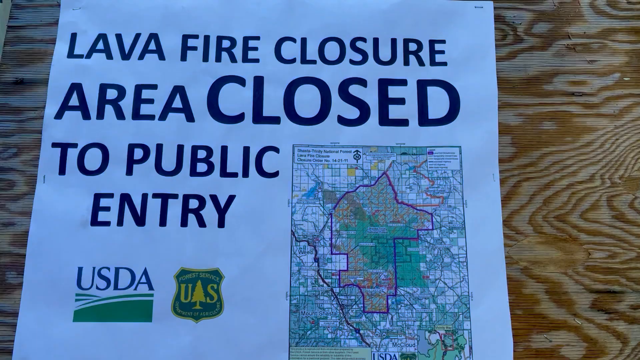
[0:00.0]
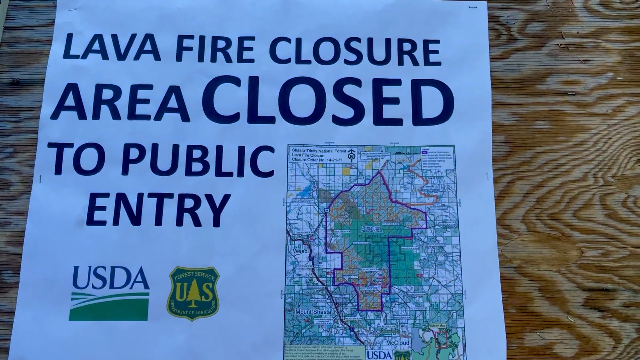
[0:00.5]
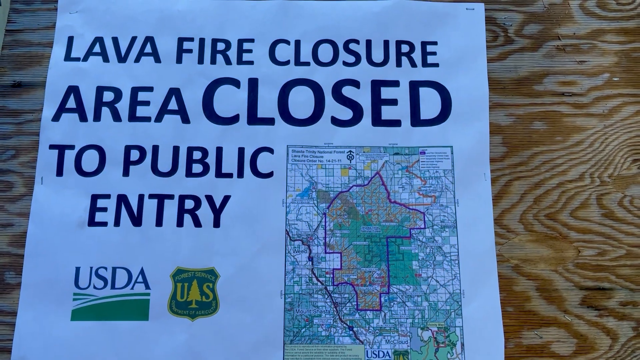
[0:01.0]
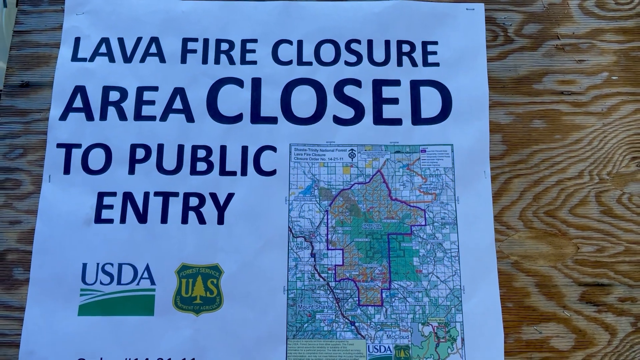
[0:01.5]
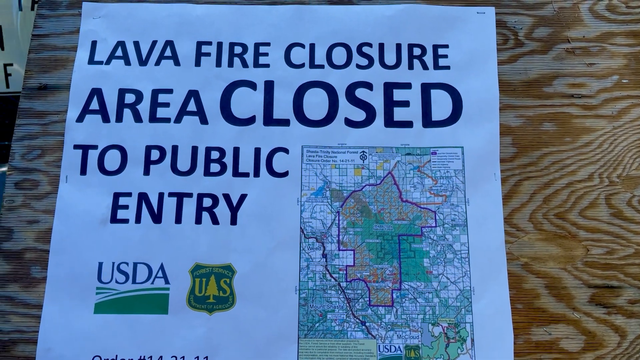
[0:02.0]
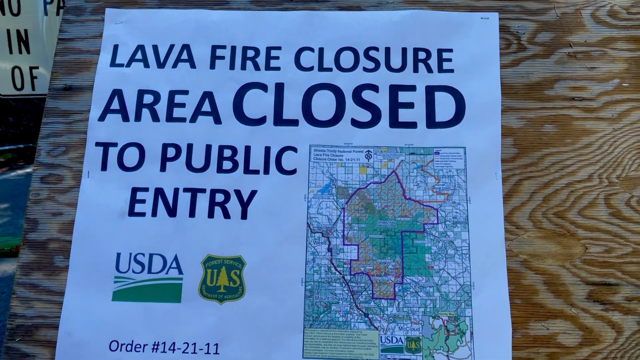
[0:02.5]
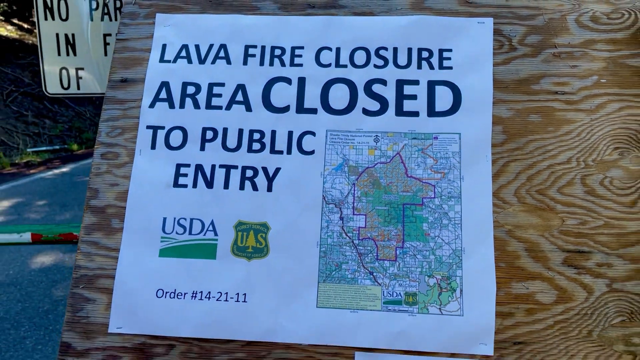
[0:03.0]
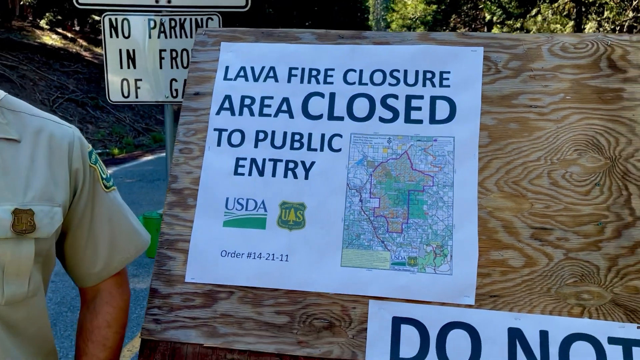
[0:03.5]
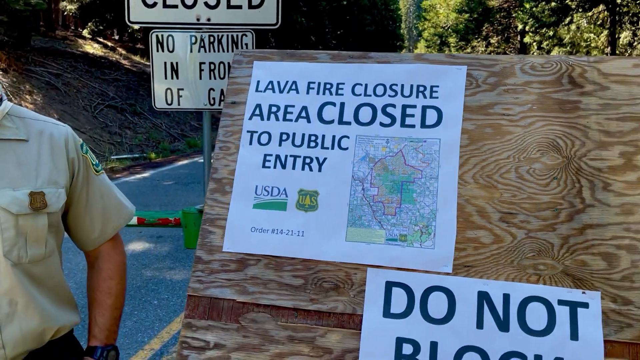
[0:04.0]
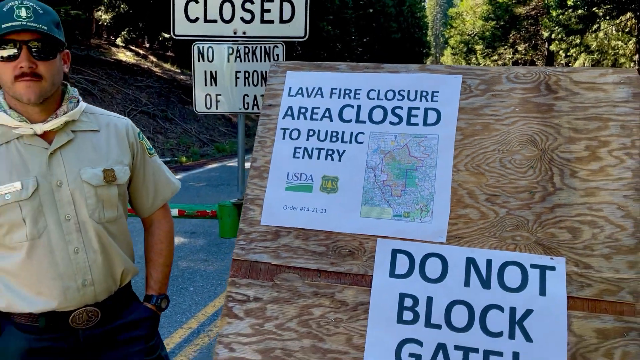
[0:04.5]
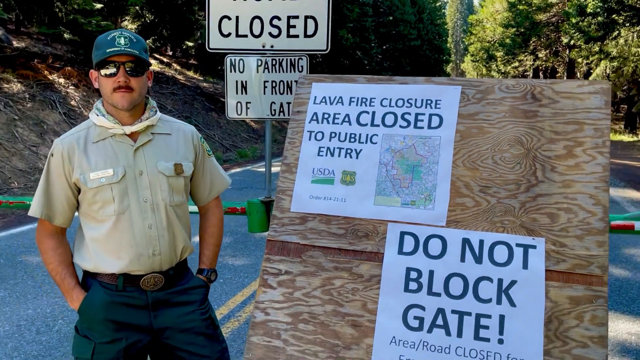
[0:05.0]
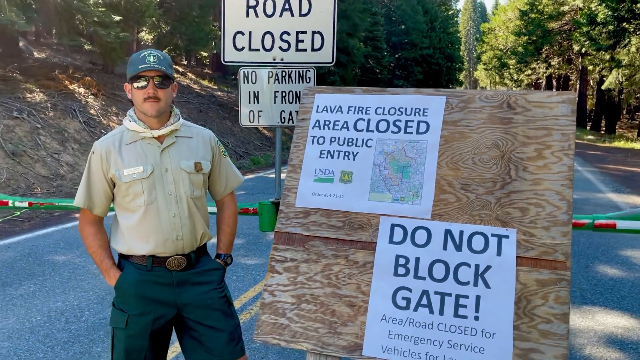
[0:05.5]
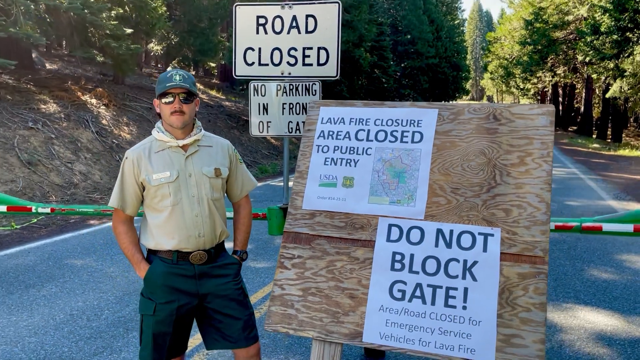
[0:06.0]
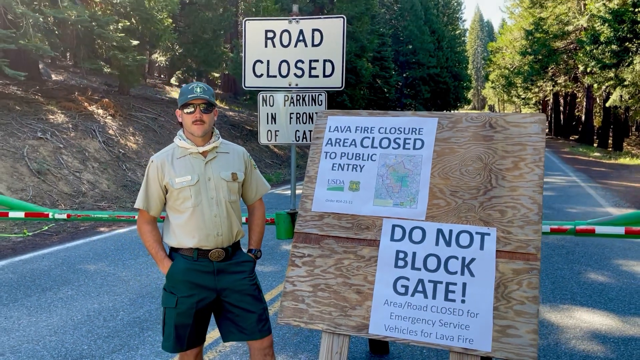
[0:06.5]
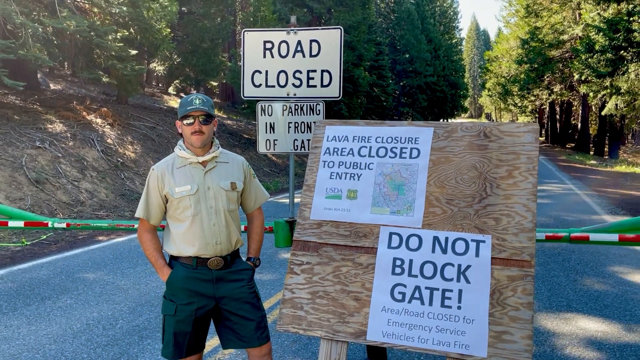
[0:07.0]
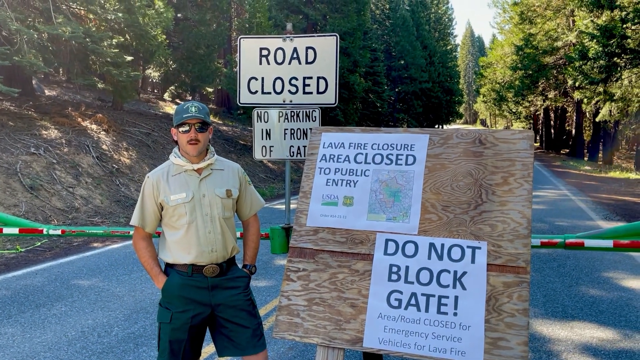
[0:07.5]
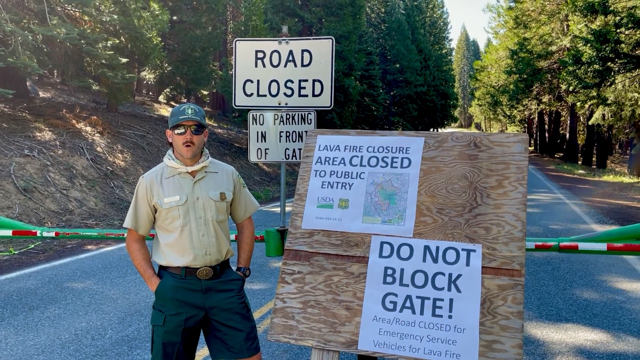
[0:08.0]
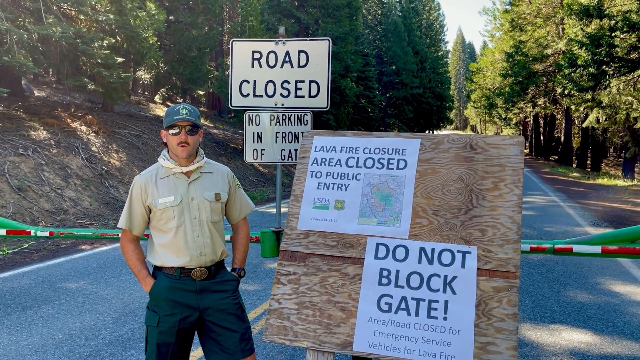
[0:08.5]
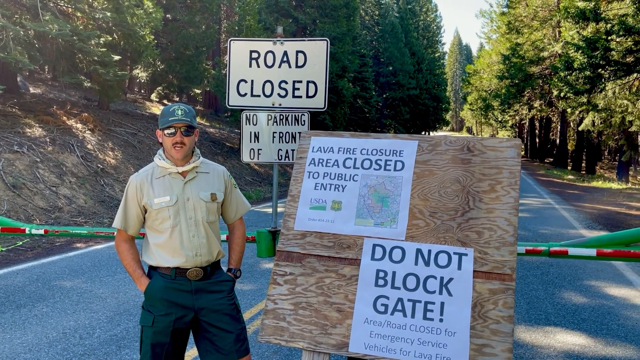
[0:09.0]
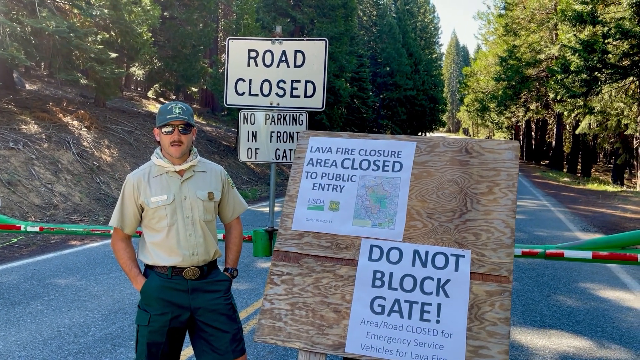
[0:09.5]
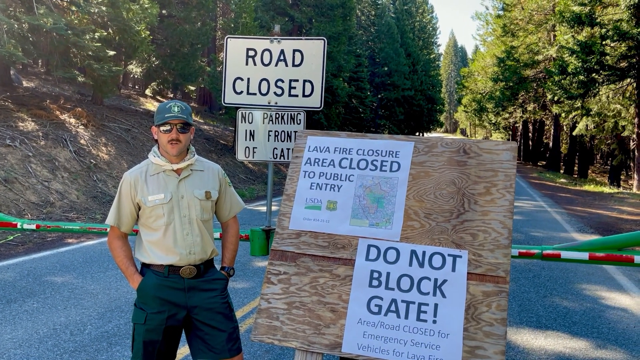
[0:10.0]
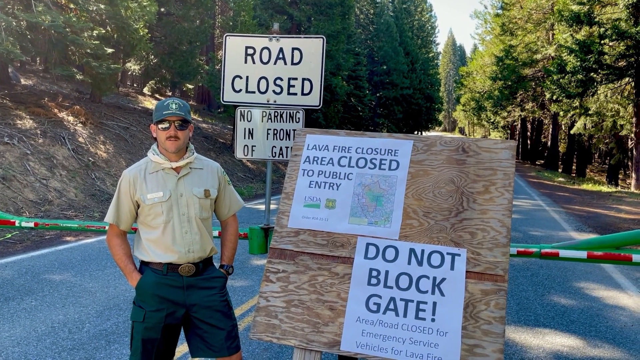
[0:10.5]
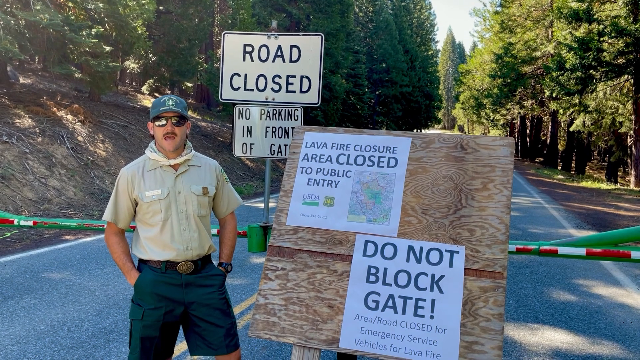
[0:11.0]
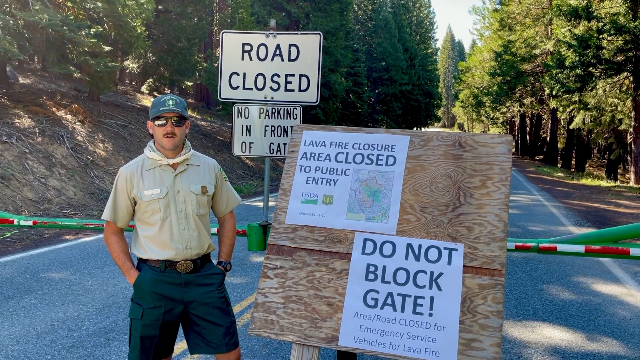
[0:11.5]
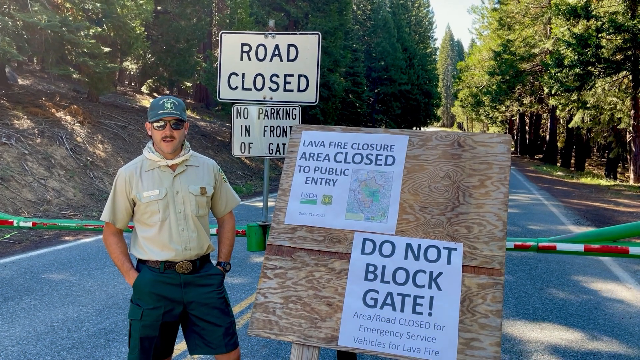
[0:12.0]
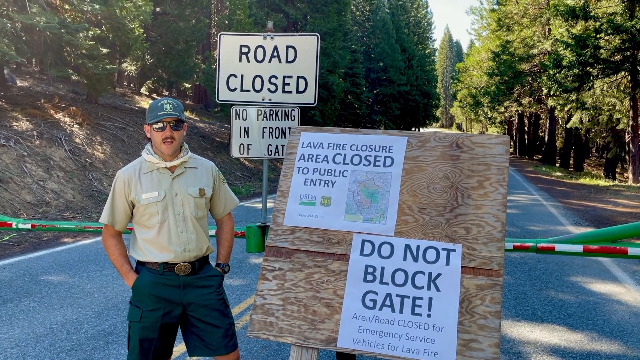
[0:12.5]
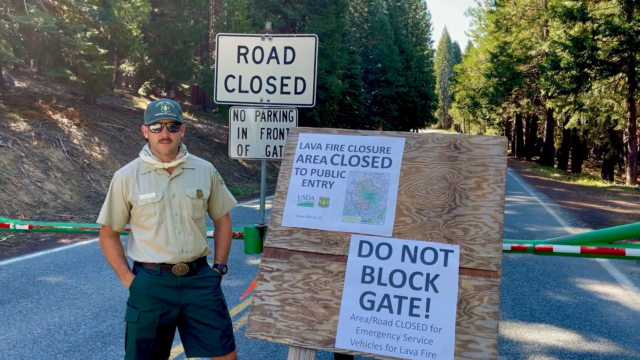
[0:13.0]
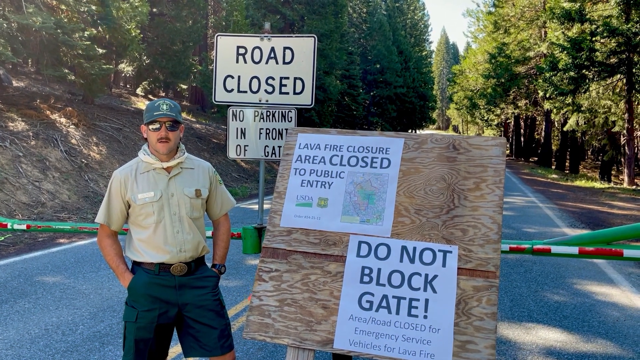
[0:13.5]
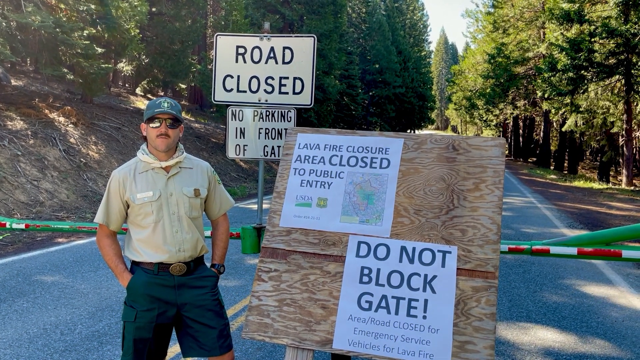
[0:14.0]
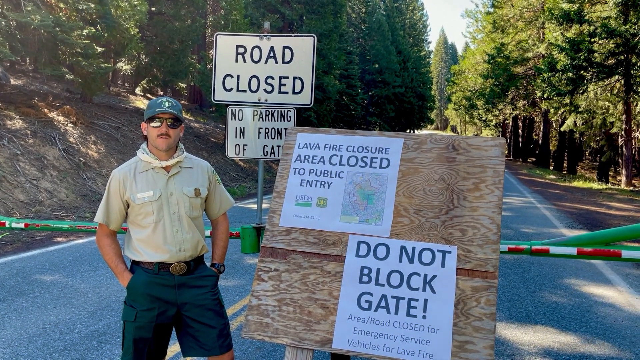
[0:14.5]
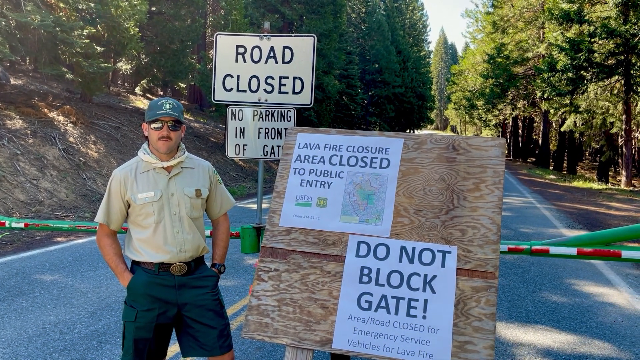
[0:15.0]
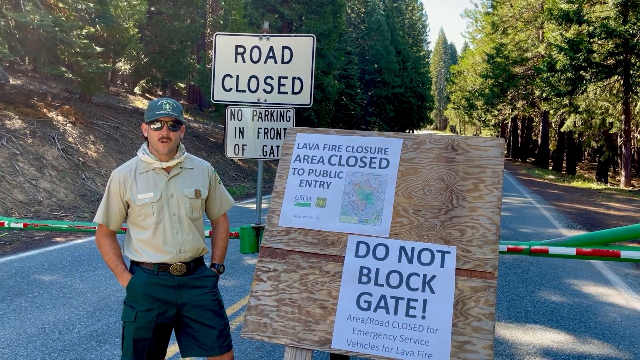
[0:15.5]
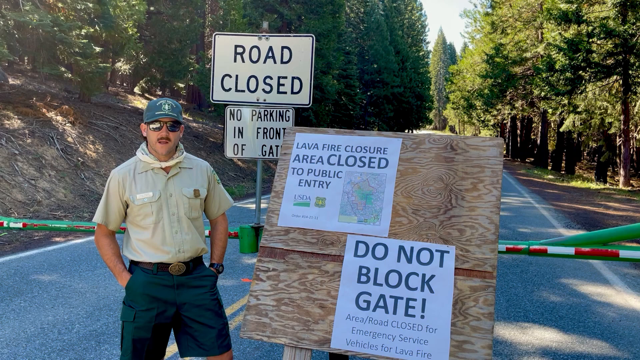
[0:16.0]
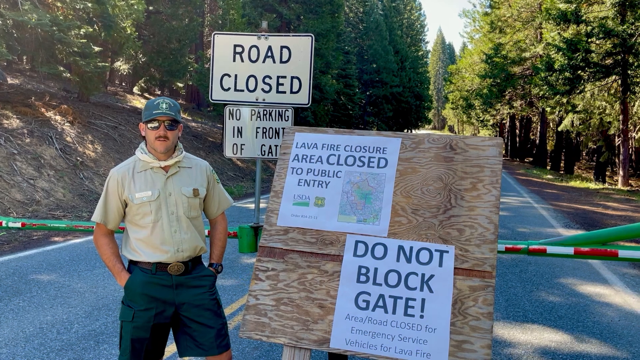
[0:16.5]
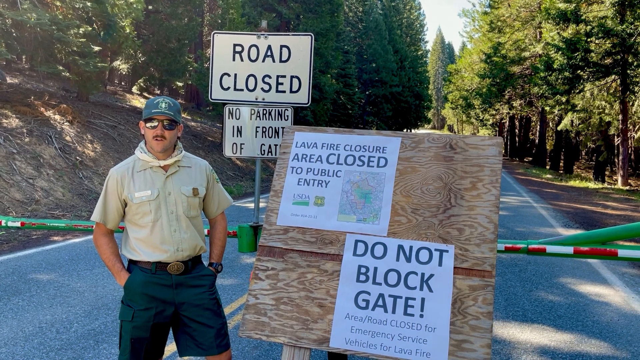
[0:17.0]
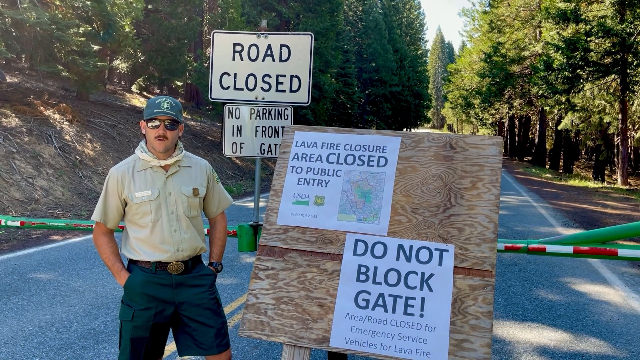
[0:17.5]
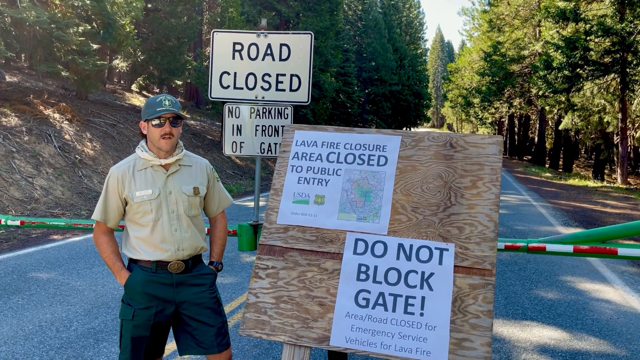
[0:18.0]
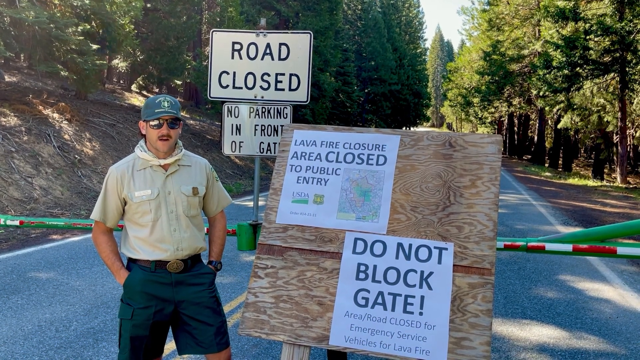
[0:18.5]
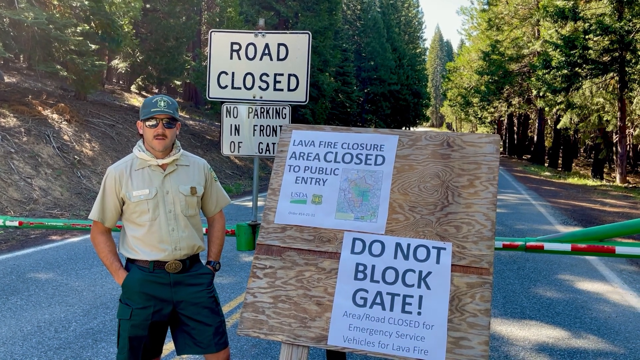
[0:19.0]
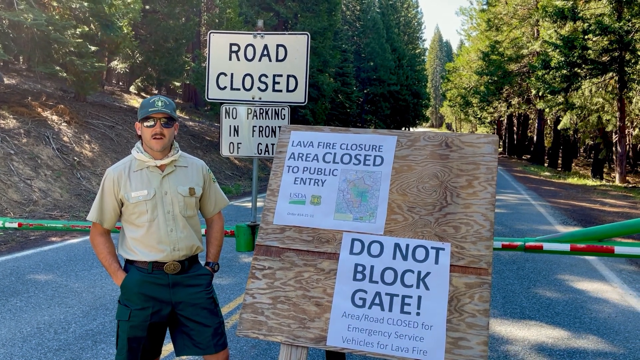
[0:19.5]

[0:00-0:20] A close-up shows a sign stuck to a wooden billboard that reads "lava fire closure area closed to public entry," with a map in the lower right of the picture. The camera zooms out to reveal a further sign beneath it, attached to the same billboard, reading "do not block gate." To the left of the billboard is a man wearing a beige t-shirt, green shorts, a black belt, sunshades and a green cap, standing beside the billboard. Behind the billboard, tape has been stretched across the road, and a sign reading "road closed" has been erected. This section of road seems to have experienced lava flow and to be closed to the public. The man's mouth is moving, and he seems to be speaking to the person filming.